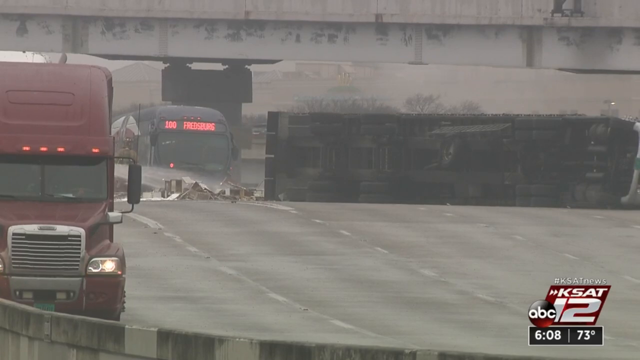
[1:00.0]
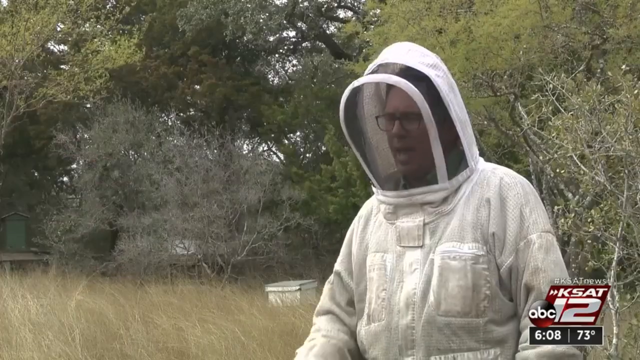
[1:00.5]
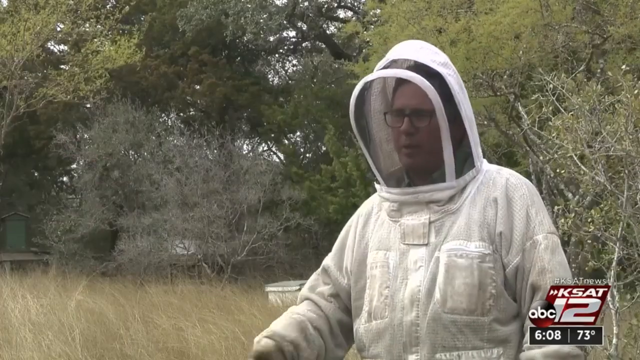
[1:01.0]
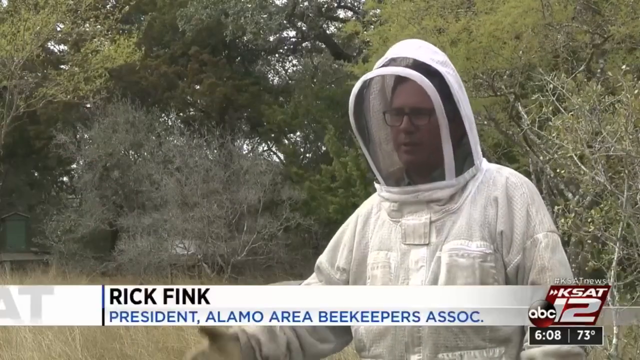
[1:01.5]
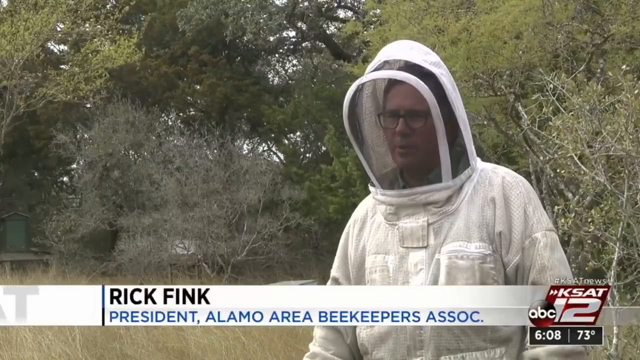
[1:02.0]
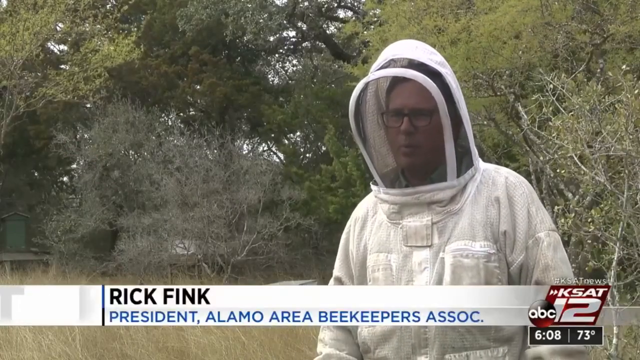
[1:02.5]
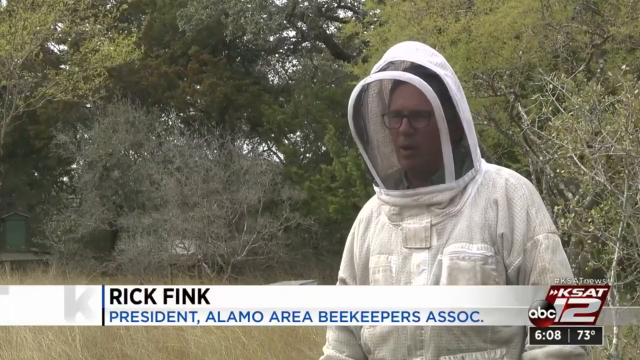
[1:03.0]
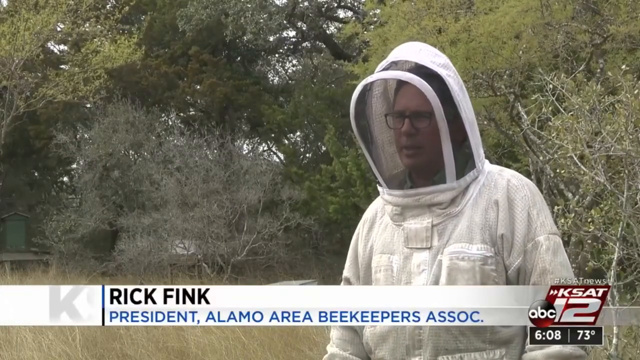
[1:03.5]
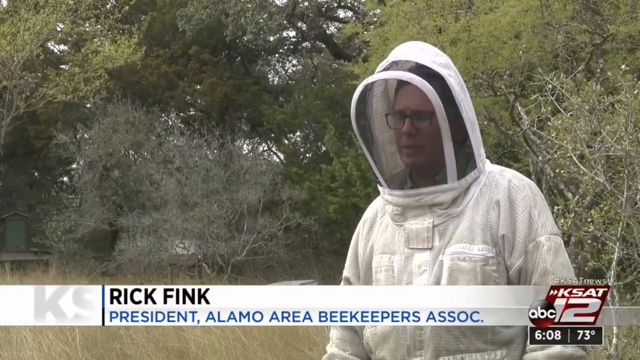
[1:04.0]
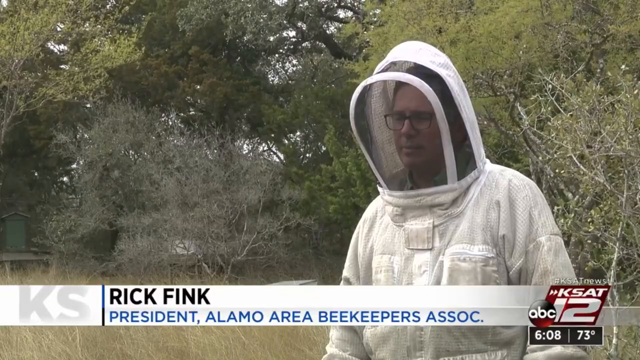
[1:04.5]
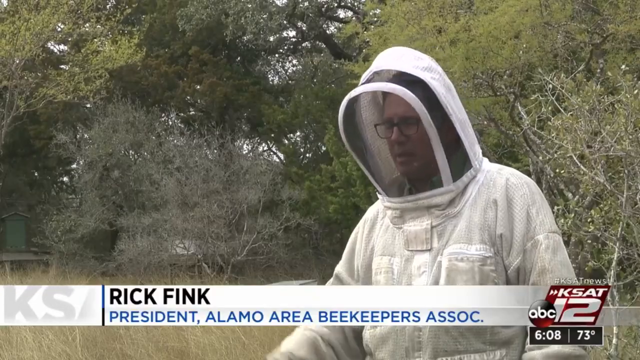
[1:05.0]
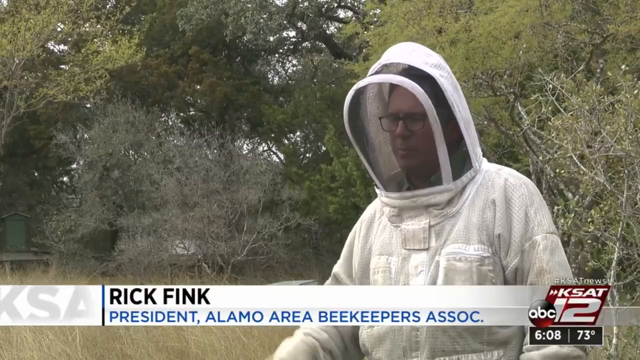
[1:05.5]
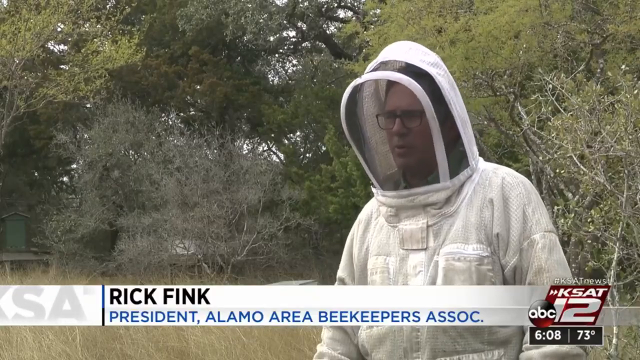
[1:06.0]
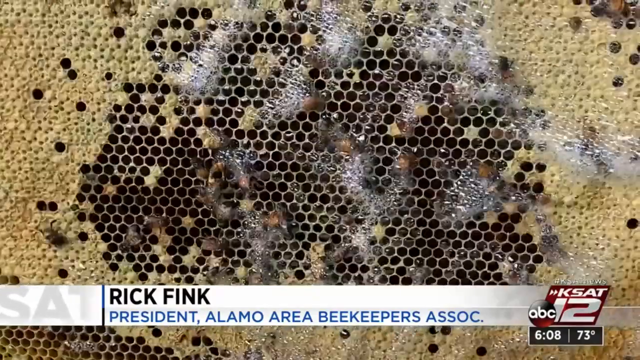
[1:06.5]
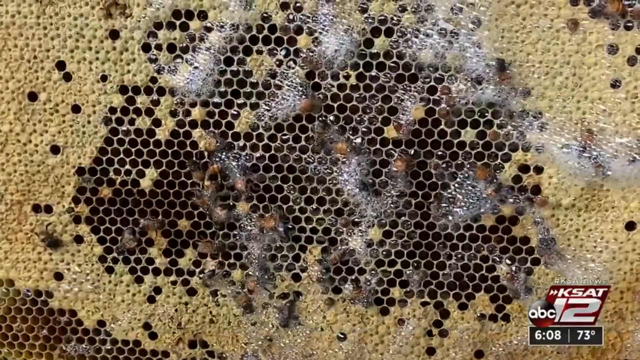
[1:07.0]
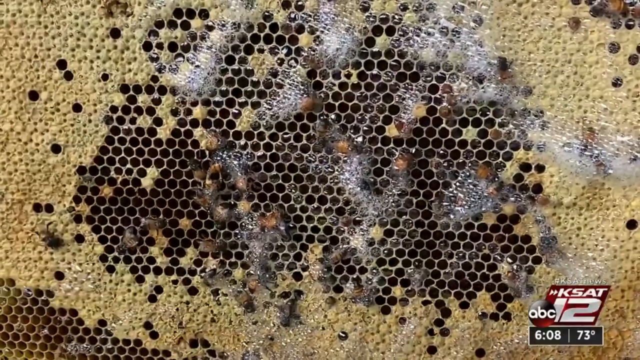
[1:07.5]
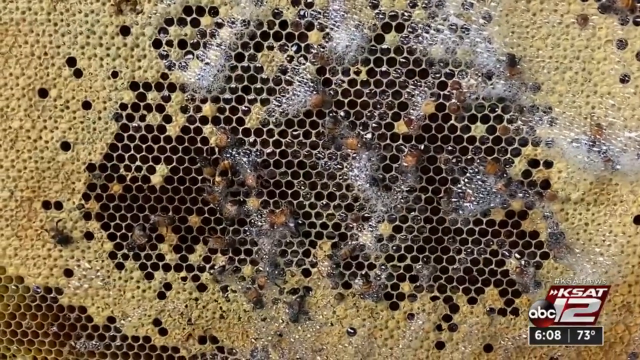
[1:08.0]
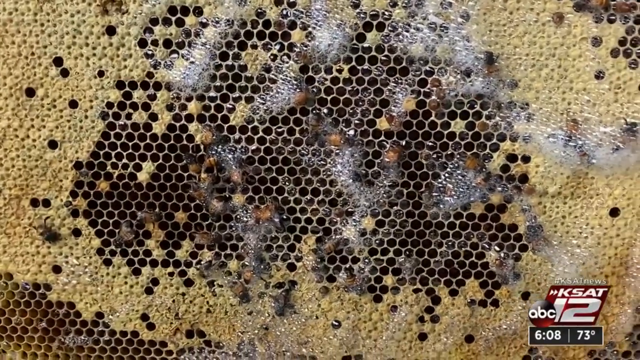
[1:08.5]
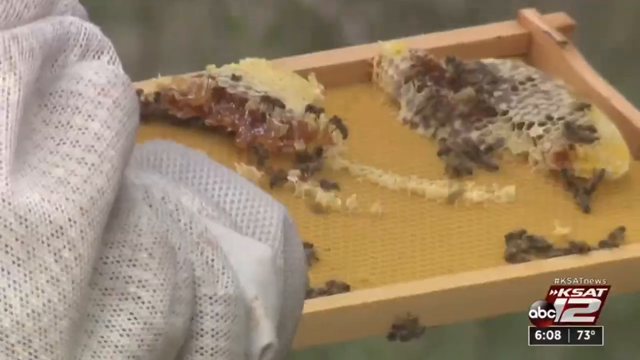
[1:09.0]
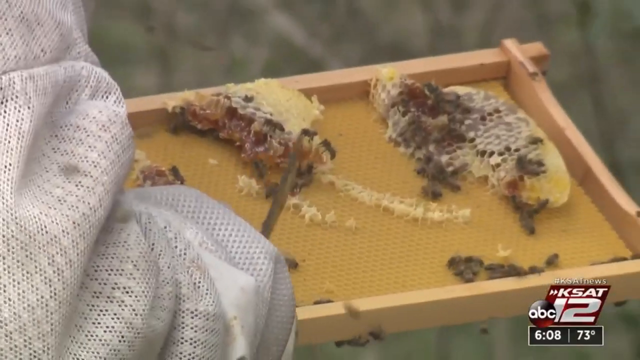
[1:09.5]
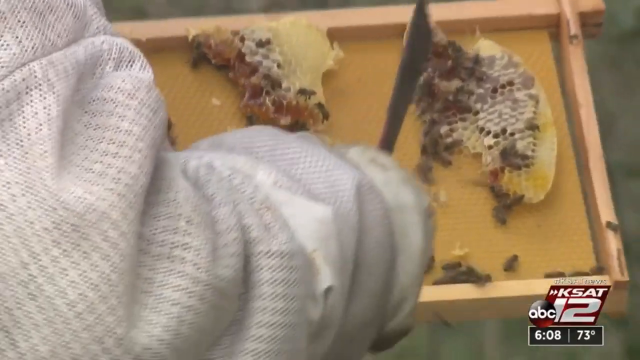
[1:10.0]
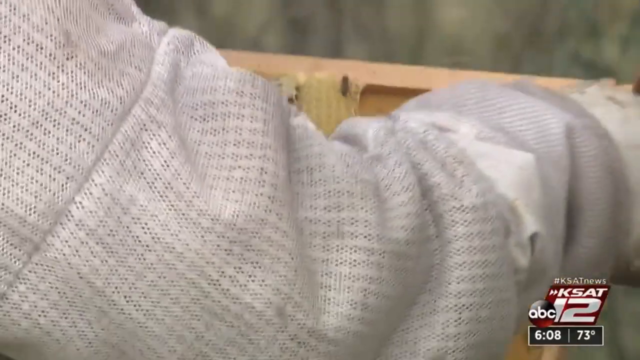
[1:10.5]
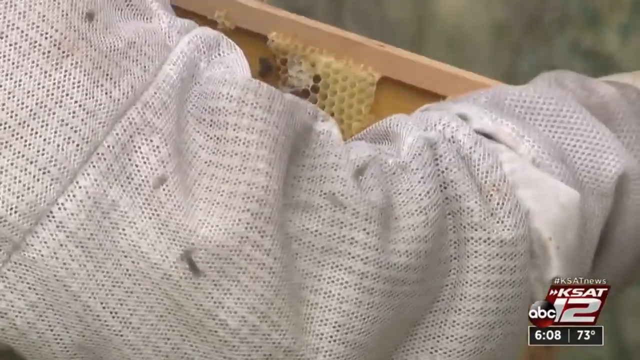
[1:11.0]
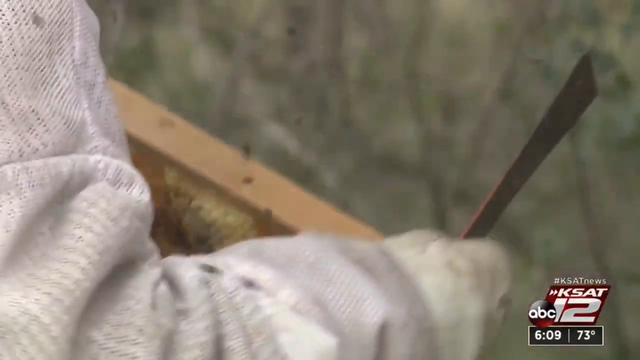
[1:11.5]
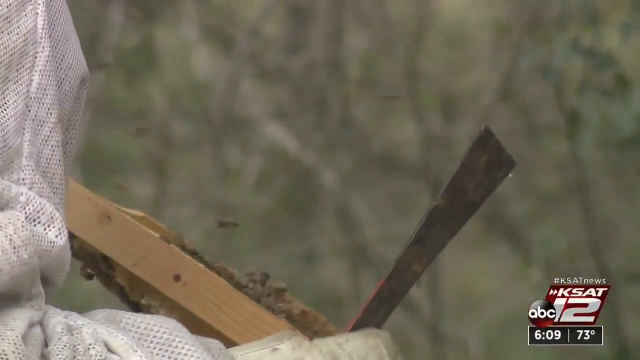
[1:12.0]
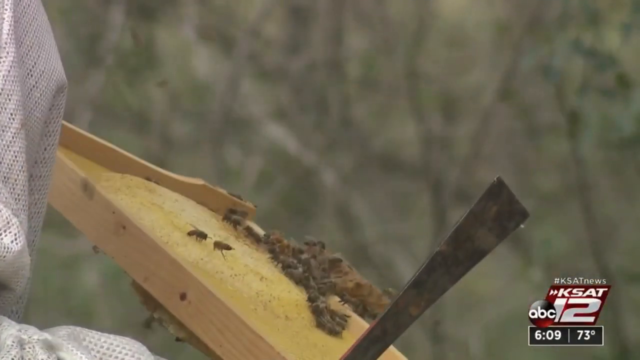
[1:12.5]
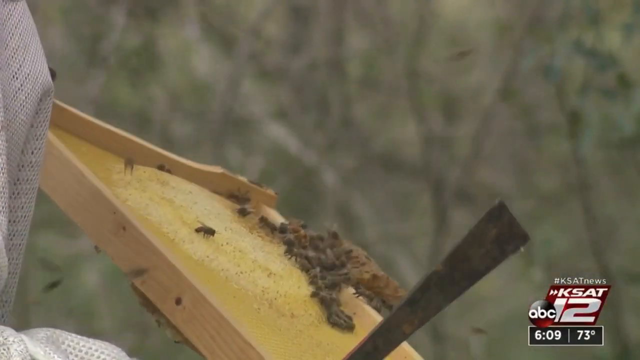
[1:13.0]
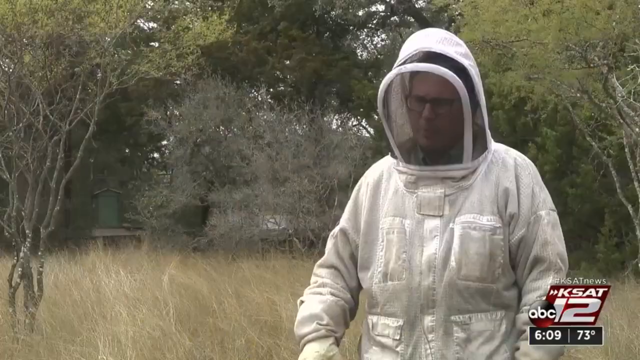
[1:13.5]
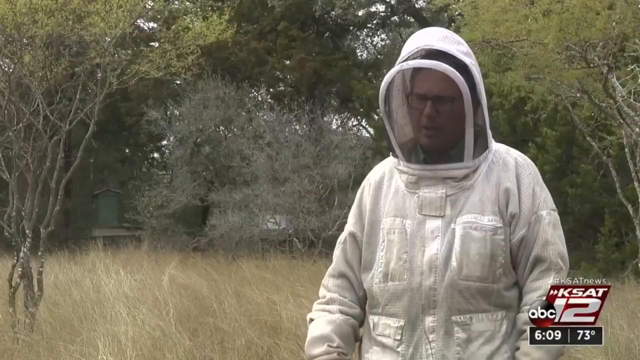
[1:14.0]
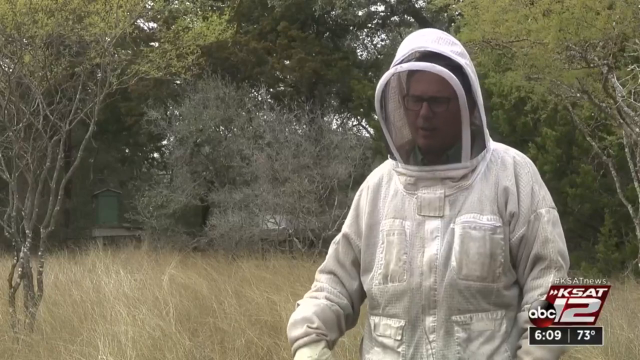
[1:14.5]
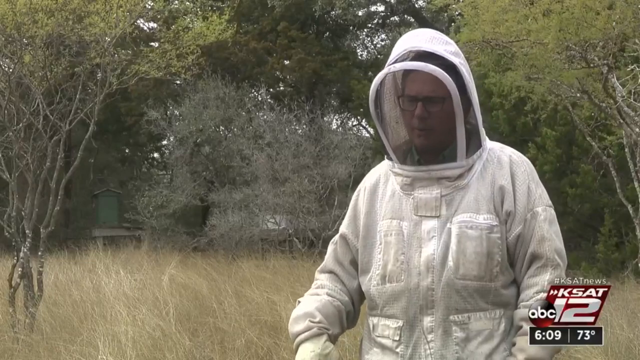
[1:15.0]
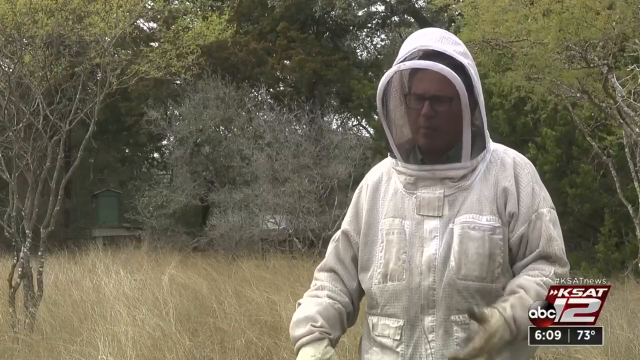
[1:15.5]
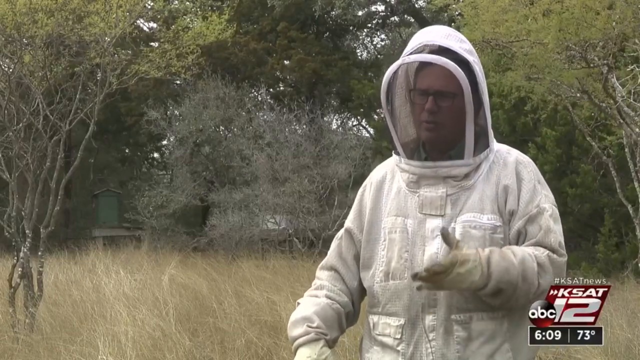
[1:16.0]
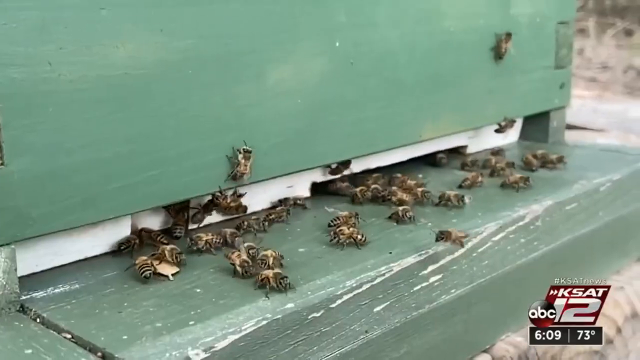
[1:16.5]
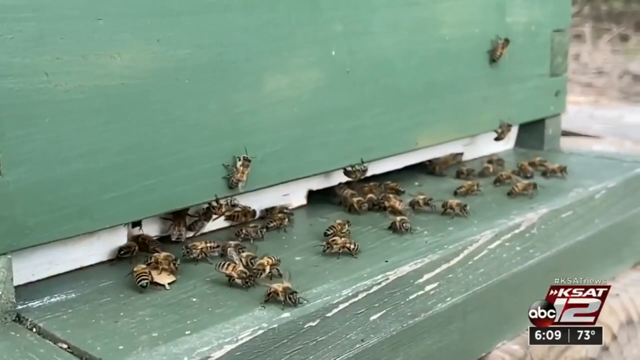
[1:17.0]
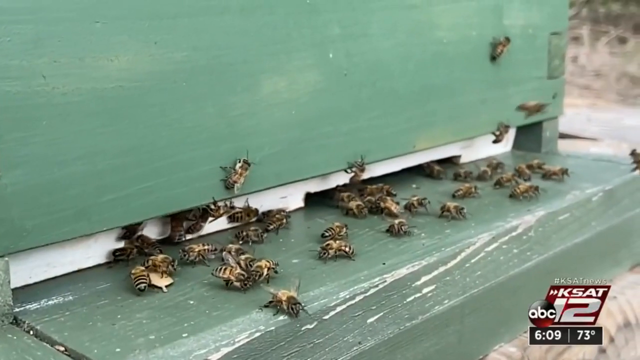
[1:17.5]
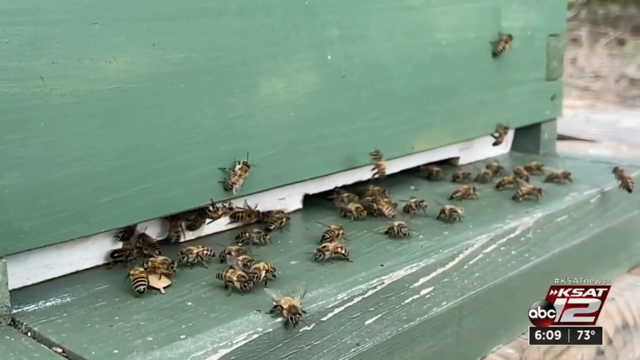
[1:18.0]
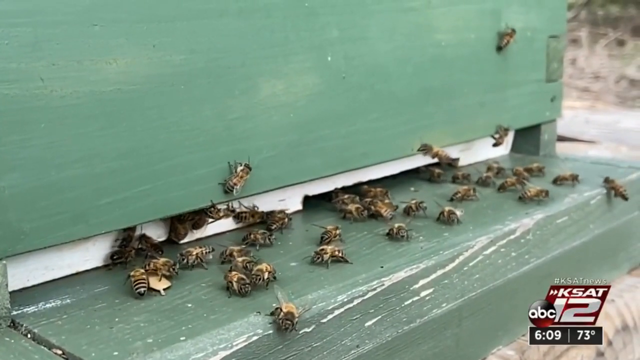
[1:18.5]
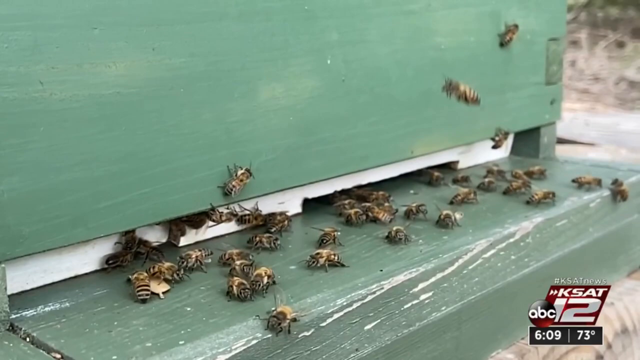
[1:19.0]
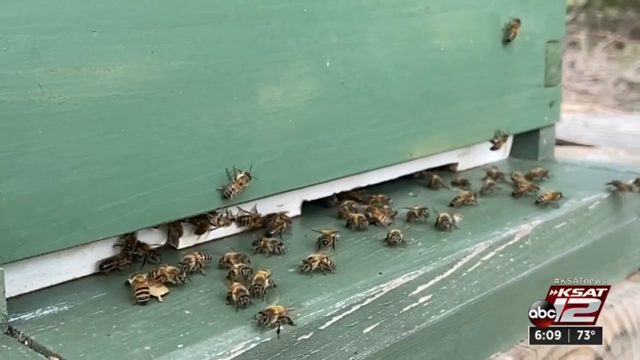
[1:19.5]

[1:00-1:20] A man wearing glasses and a protective outfit with a head mask is talking. Behind him are some trees, in what looks like a forest. A banner at the bottom reads "Rick Fink. President, Alamo Area Bee Keepers Association," and "KSAT ABC 12" is on the right. The scene switches to a bee screen with a lot of honey and wax on it. Next, a tray of honey wax with some bees on it is shown, and someone in an outfit uses tools in his right hand and flips the wax panel upside down. He is talking. The scene then switches to bees coming out from the entrance of a box. Most of the bees are just walking on the box, looking like they are skating or sliding, while one or two fly like a helicopter.